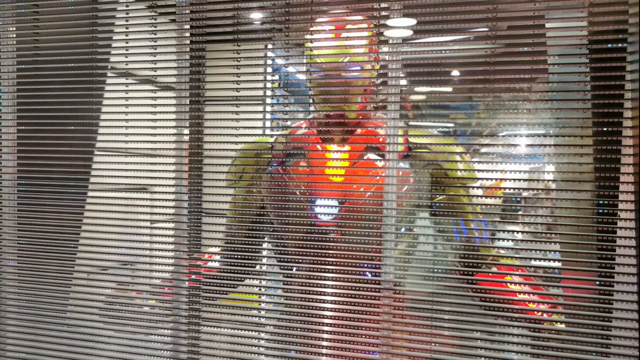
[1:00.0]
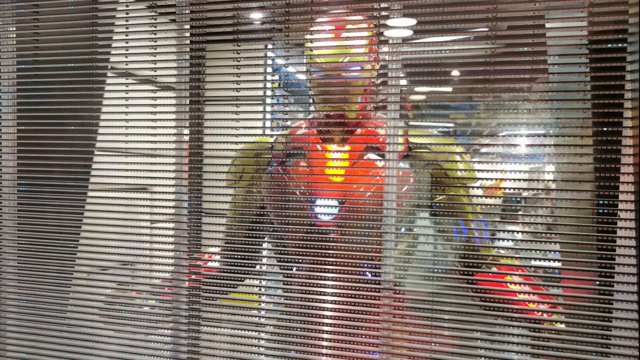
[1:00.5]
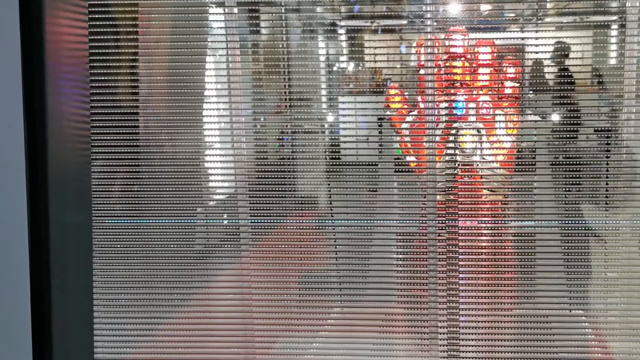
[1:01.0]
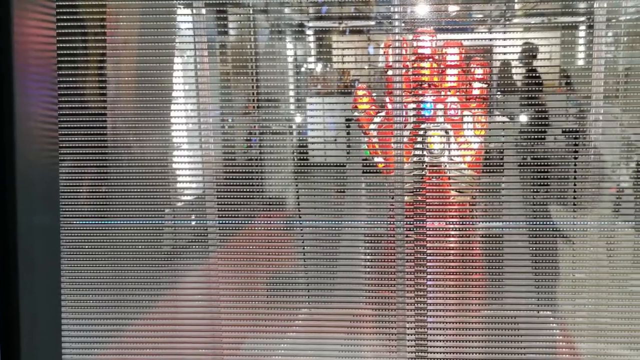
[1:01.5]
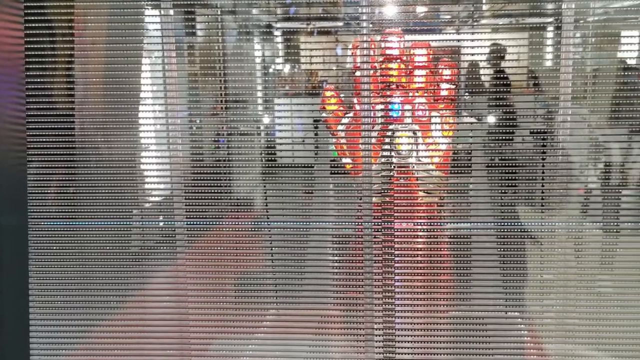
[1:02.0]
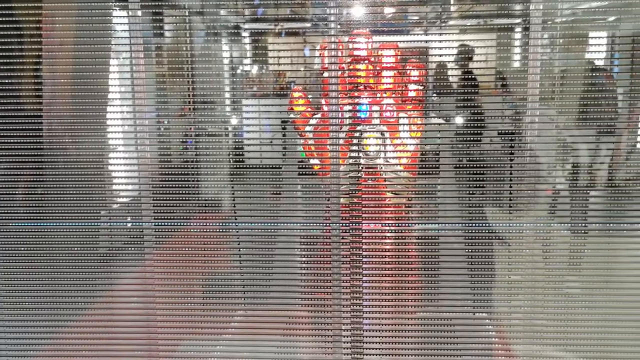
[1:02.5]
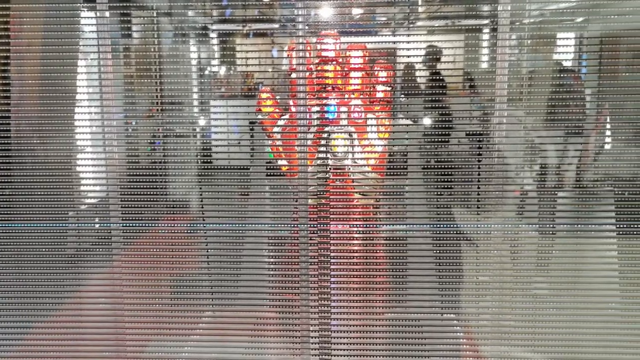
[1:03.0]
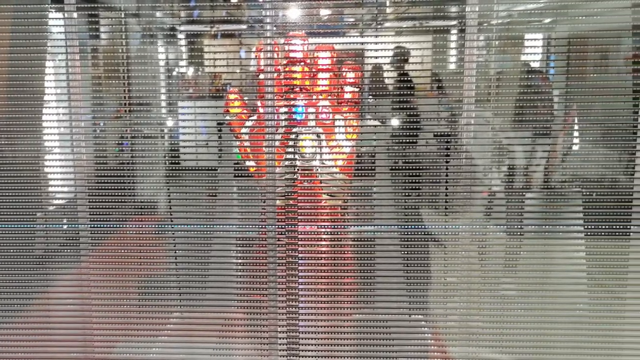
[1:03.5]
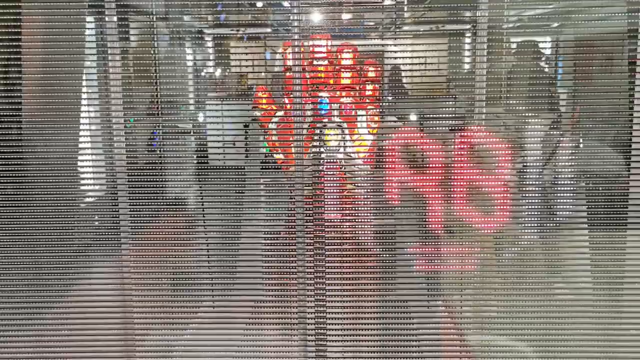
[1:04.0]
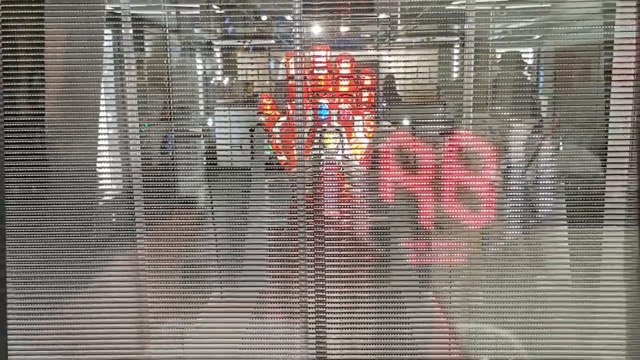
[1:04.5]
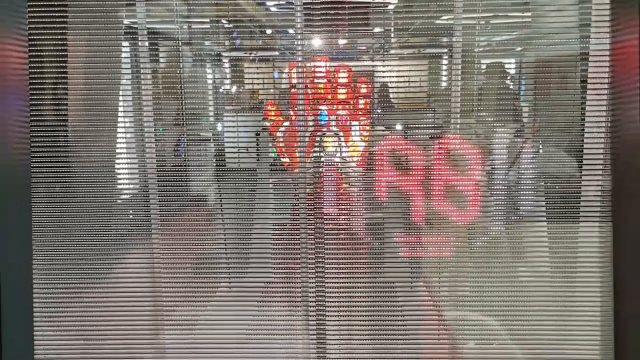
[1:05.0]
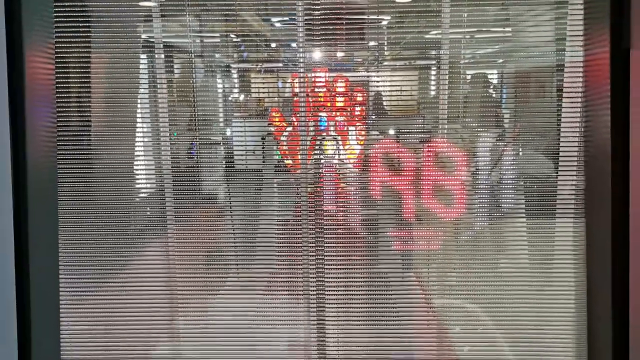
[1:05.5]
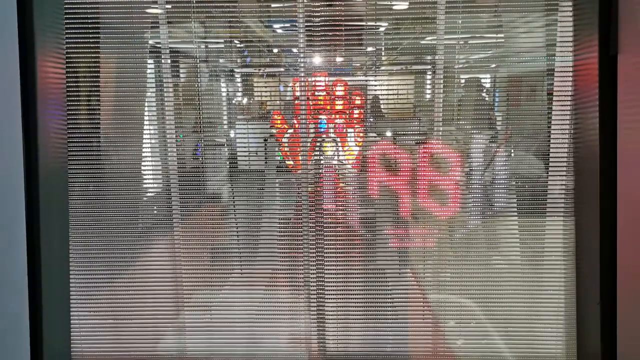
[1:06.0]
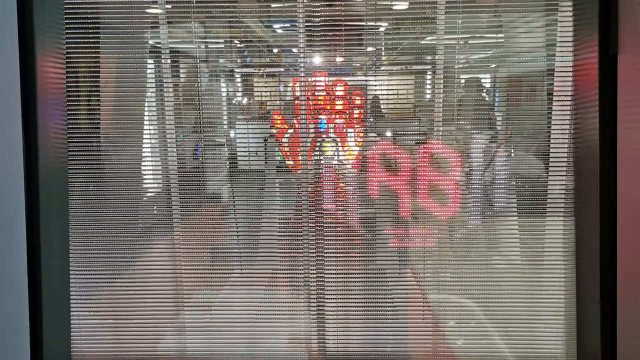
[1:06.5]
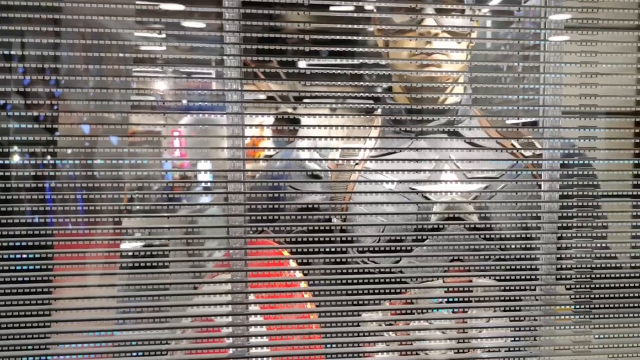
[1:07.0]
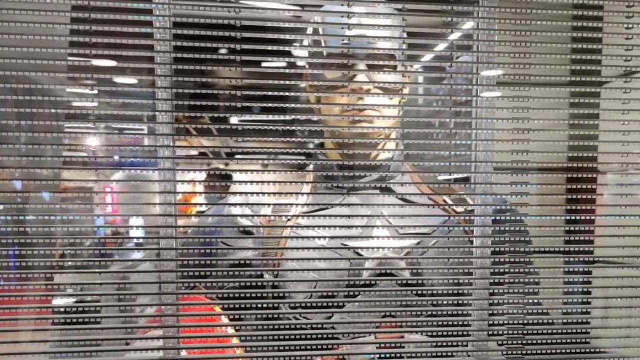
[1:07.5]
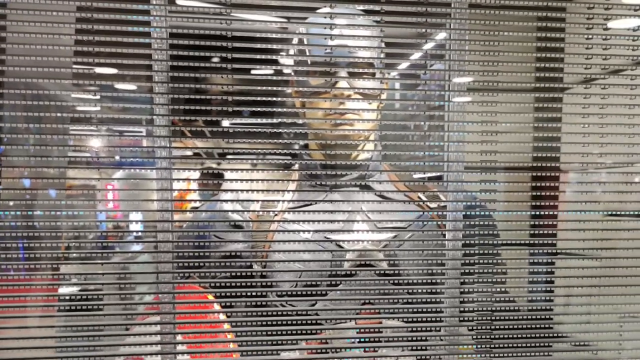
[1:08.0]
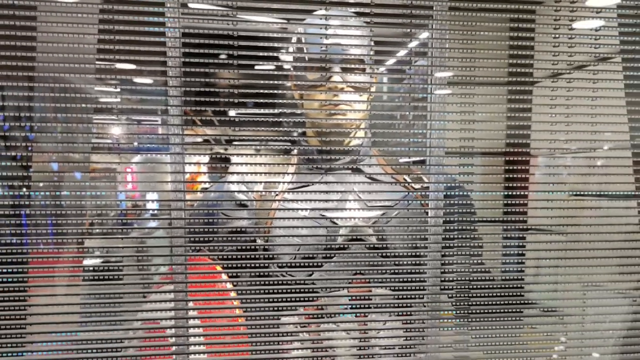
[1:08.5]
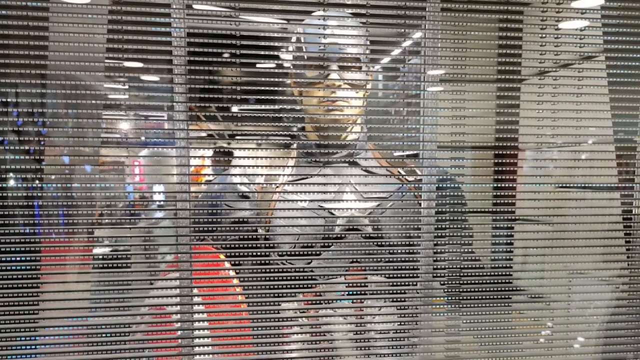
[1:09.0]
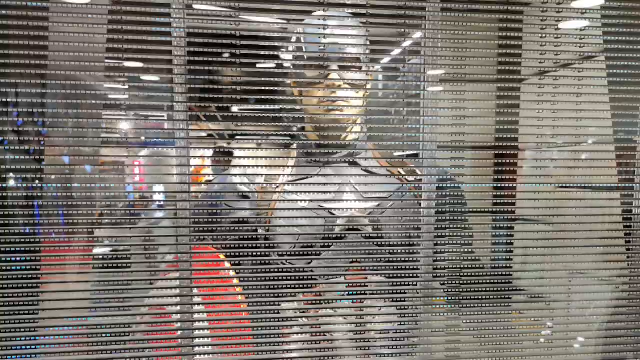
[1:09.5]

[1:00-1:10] More statues from the expo are shown, seemingly inside some type of closed-off room or display case. The video pans through photos of the expo, which seems to advertise Hot Toys Rebel Base. Another display case holds the Iron Man Infinity Gauntlet with each of the Infinity Stones, and another case displays Captain America, with what looks to be a statue inside. The video goes through the photos, zooming in, zooming out and panning.